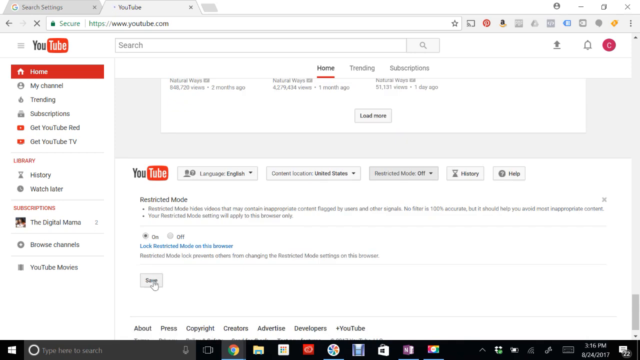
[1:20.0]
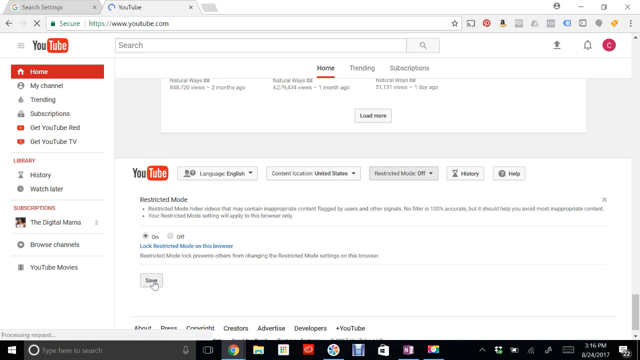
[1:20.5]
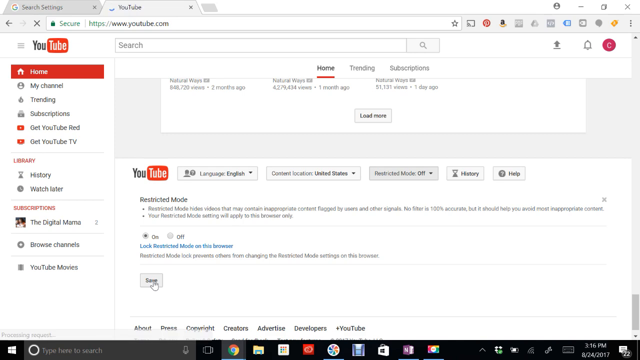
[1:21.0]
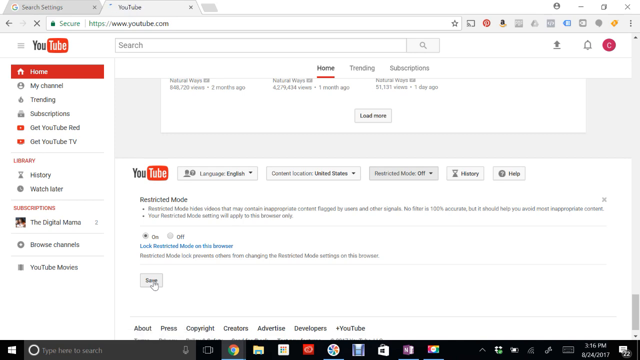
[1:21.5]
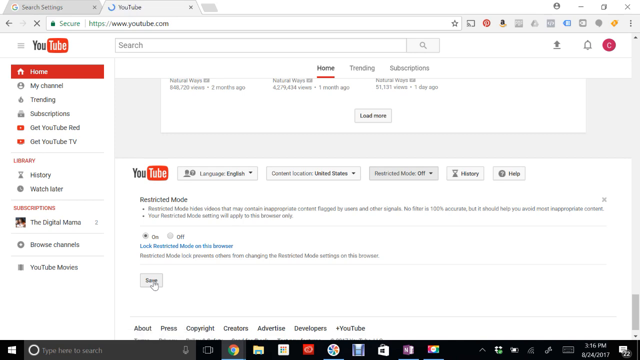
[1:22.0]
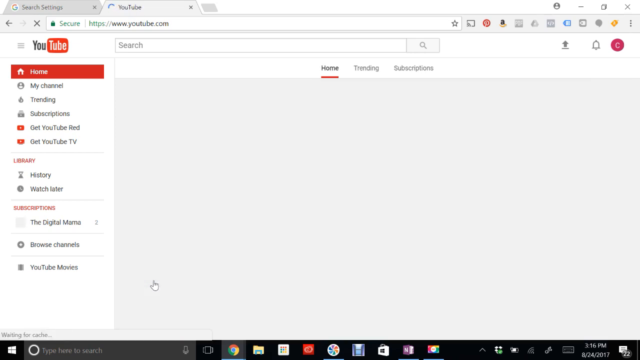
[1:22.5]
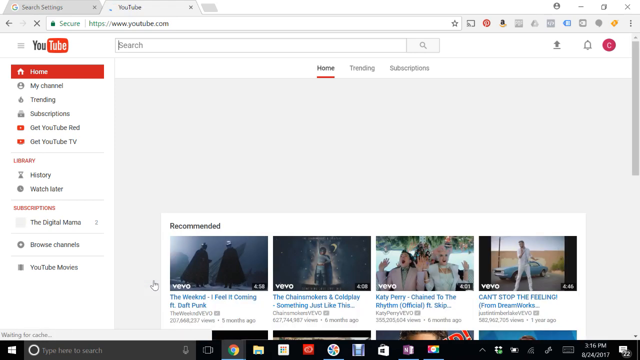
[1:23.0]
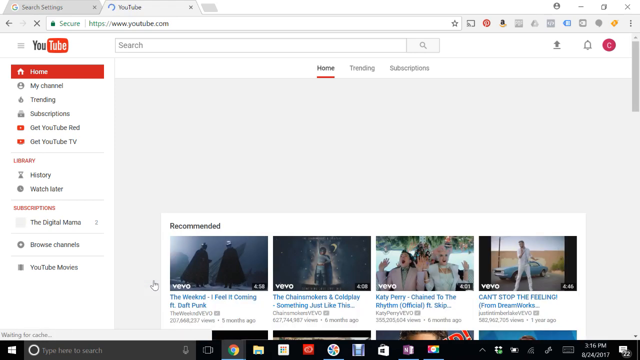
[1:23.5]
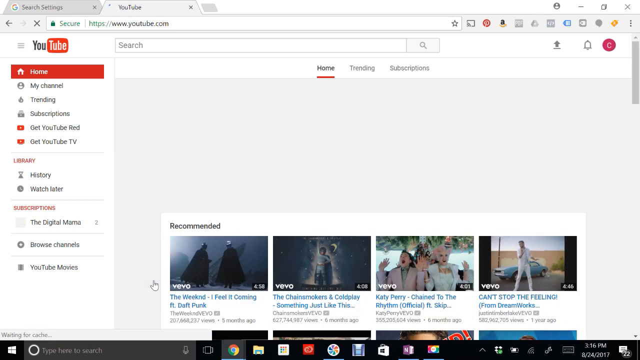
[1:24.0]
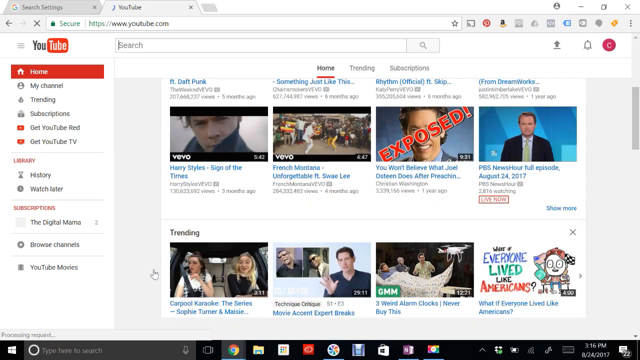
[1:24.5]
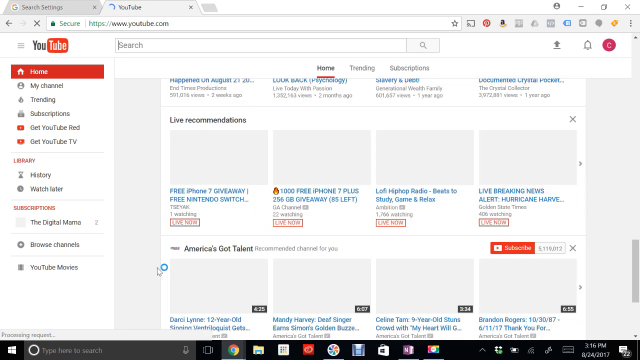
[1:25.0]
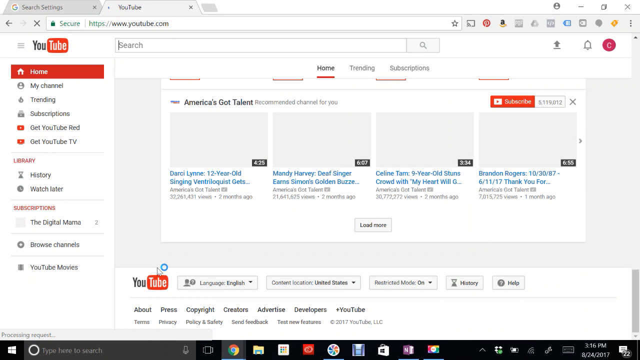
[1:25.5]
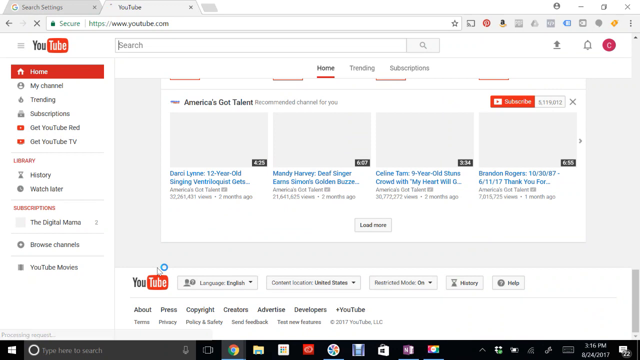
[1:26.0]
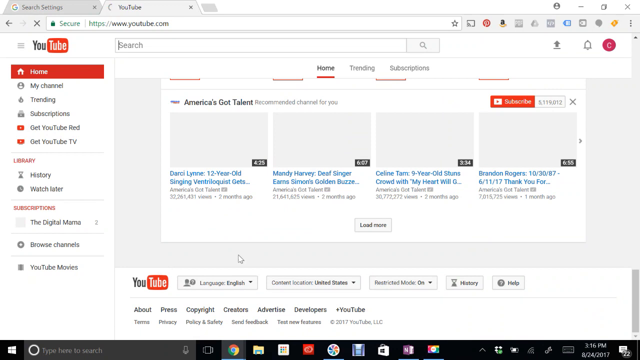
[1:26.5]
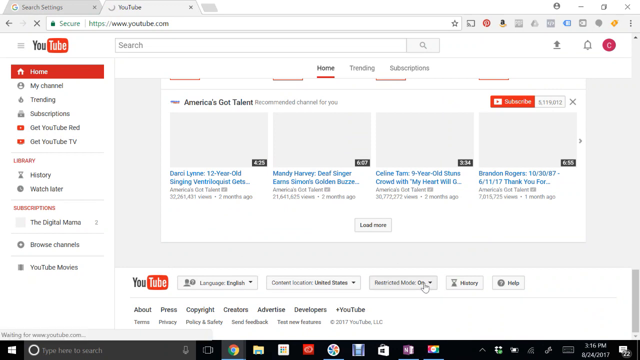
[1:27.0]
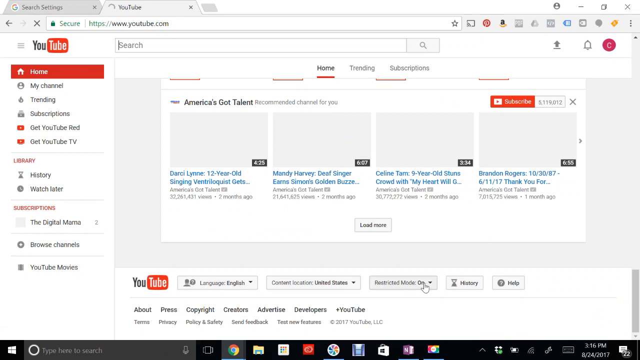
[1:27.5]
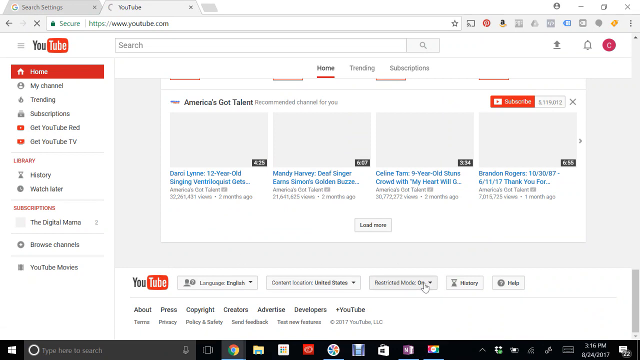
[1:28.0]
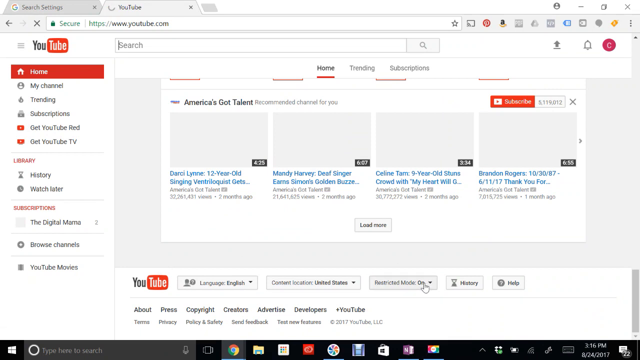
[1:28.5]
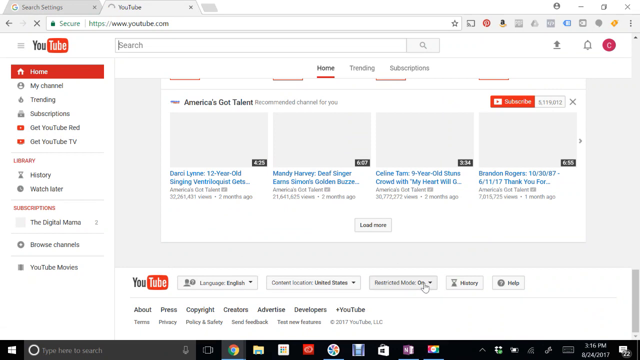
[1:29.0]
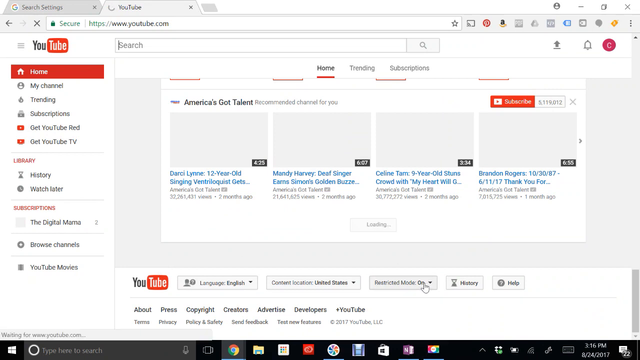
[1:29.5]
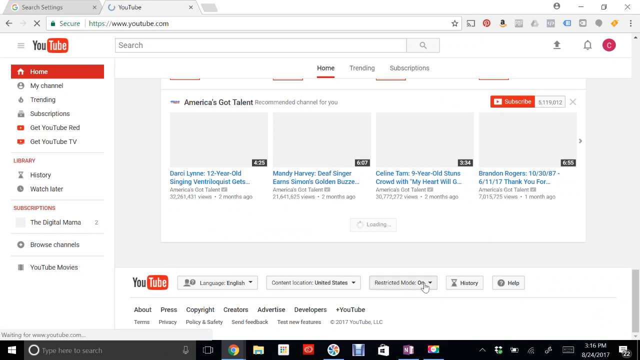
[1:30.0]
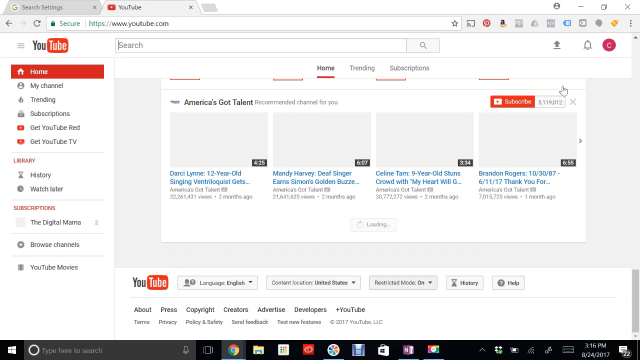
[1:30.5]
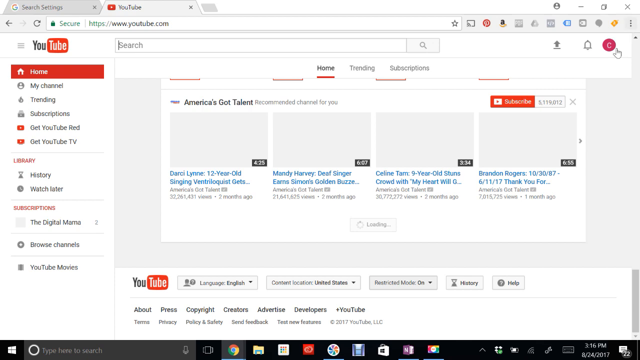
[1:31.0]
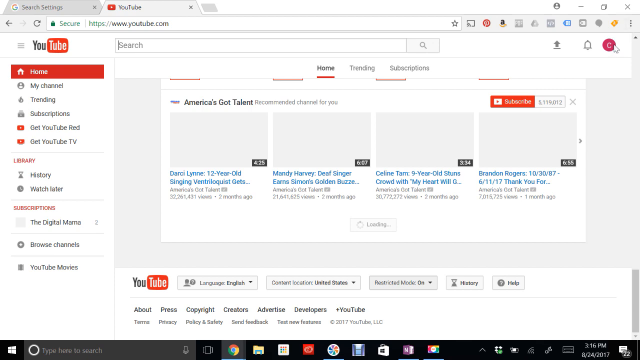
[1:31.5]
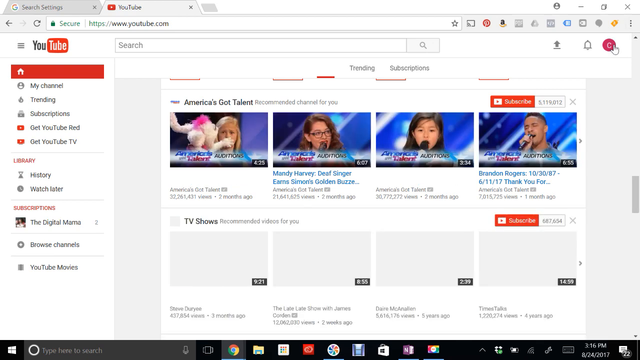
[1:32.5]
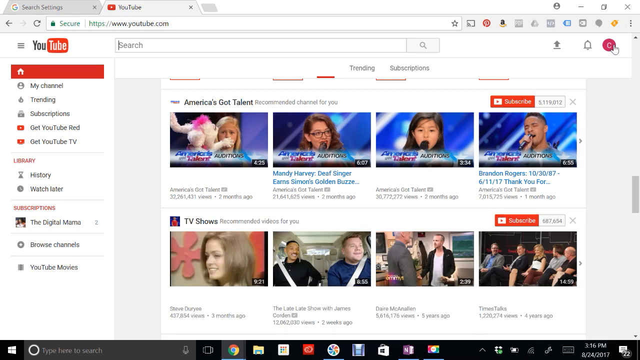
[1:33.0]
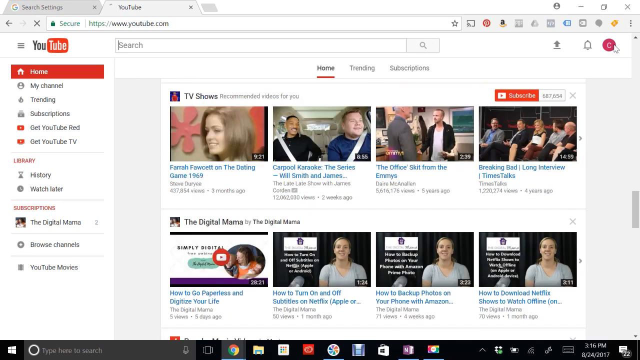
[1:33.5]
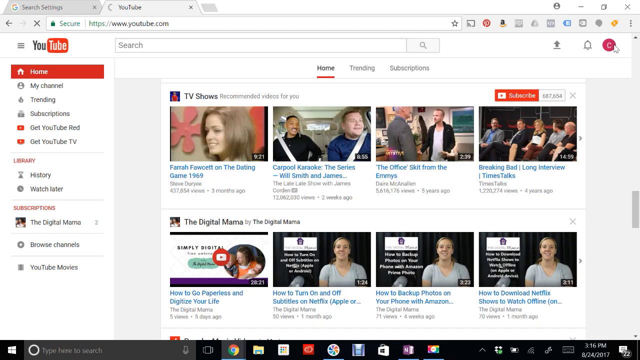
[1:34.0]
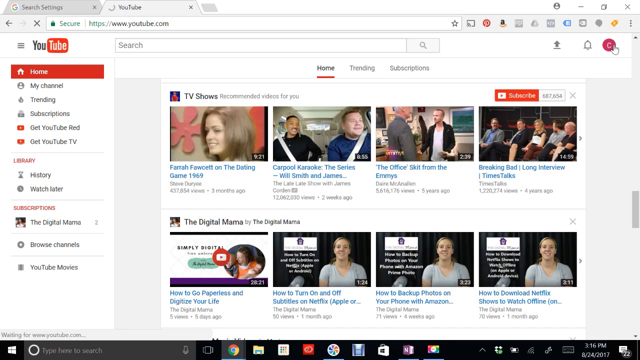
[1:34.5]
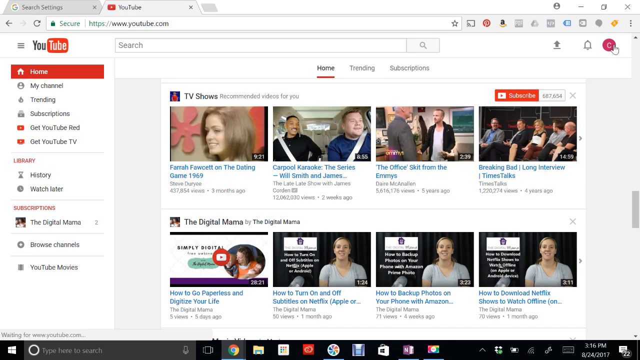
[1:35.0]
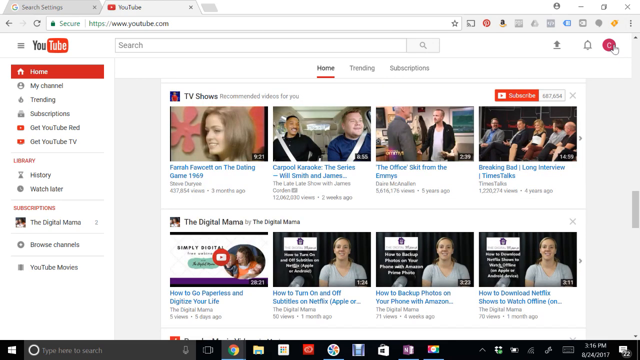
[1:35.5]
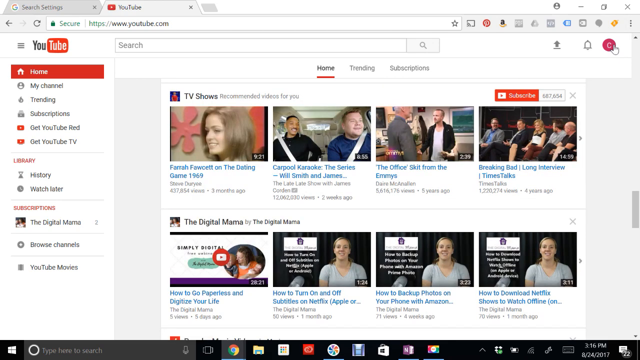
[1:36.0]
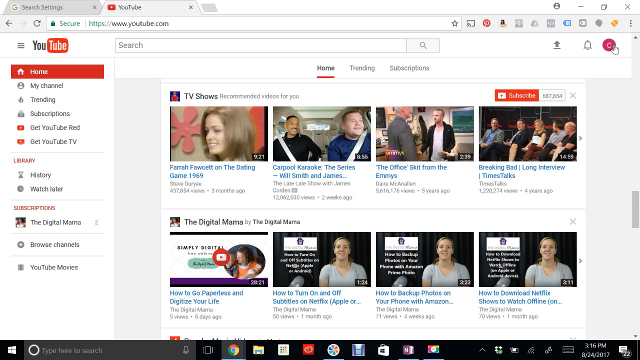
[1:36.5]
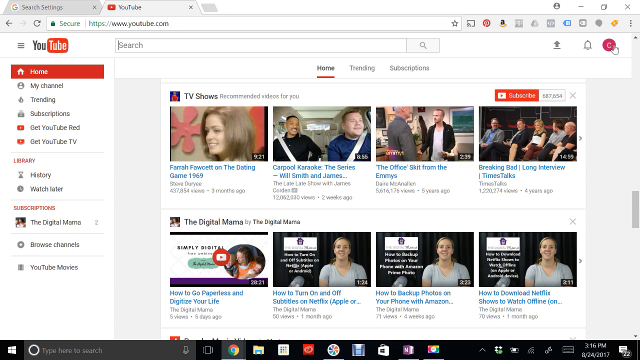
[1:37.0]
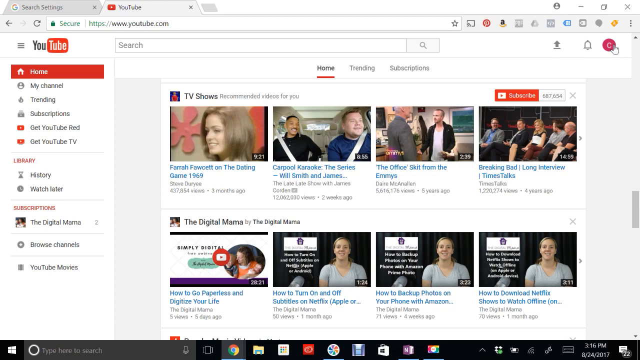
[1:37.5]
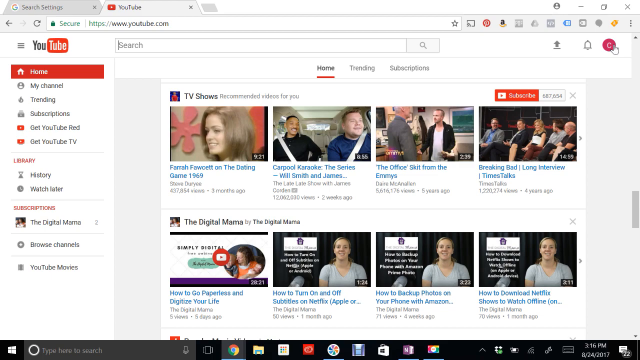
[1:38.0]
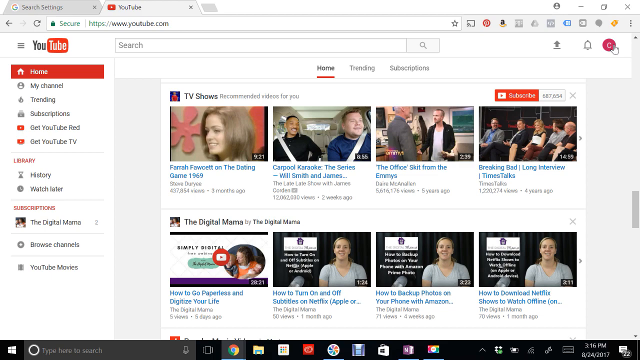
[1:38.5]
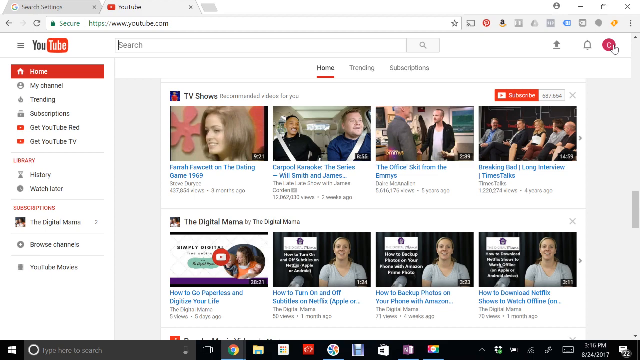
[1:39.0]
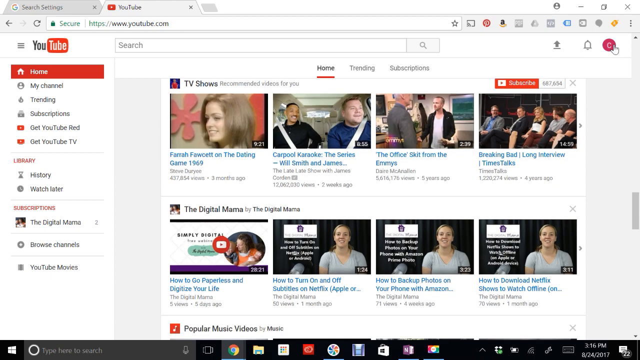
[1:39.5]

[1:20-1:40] At the bottom of the YouTube home page, "restricted mode" has been toggled on and the save button is pressed. The view then returns to the YouTube home page, where restricted mode is shown as on at the bottom of the screen, and the mouse moves back up to the top of the screen.